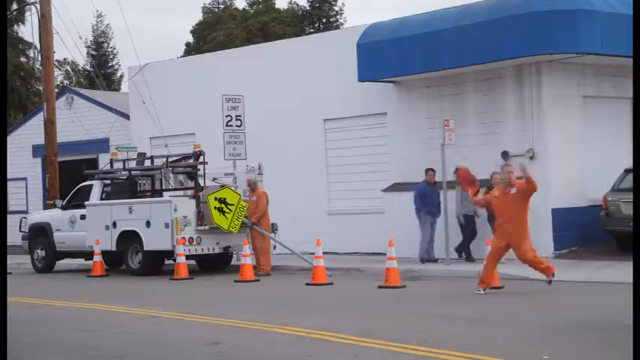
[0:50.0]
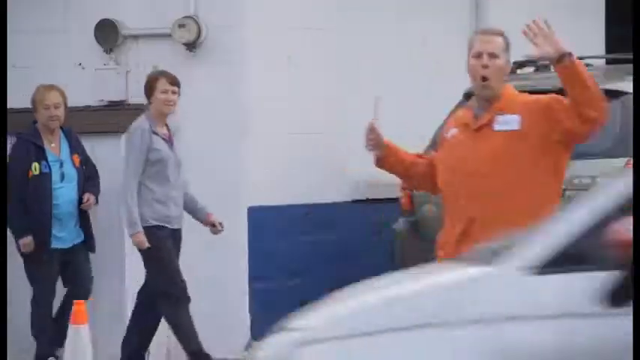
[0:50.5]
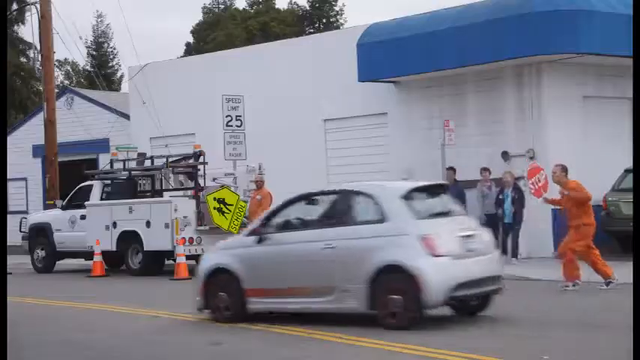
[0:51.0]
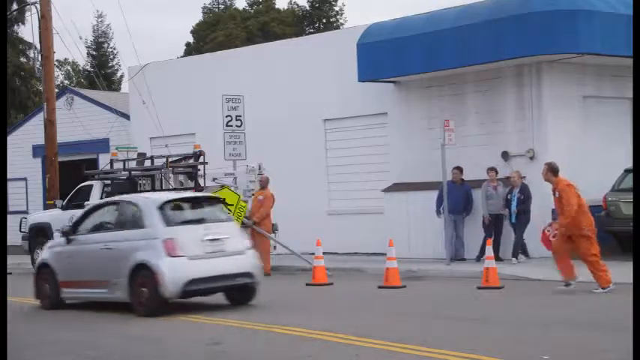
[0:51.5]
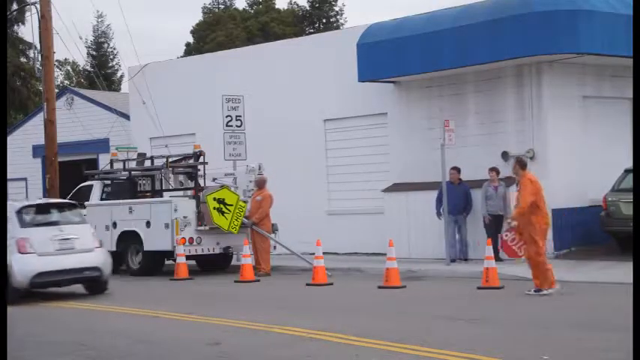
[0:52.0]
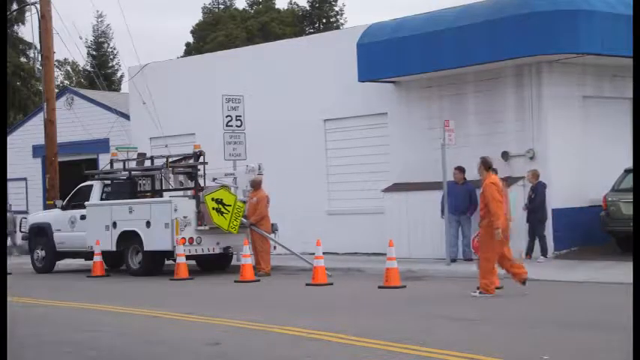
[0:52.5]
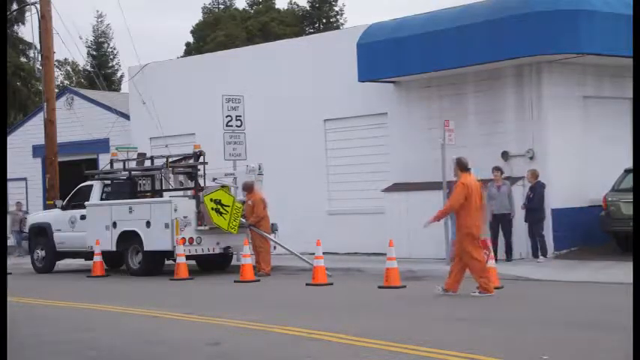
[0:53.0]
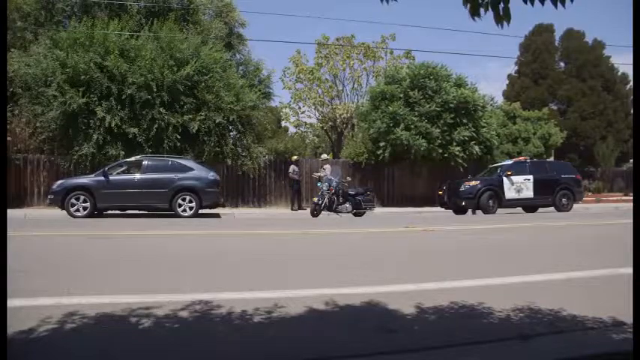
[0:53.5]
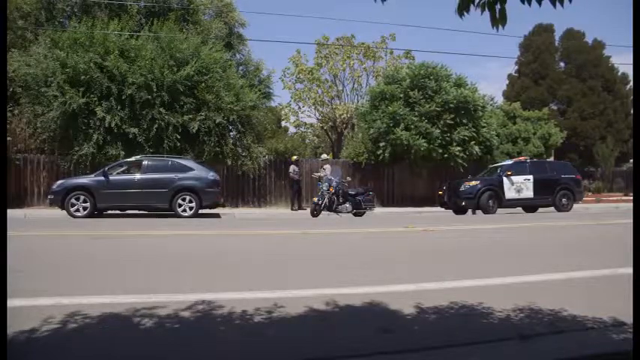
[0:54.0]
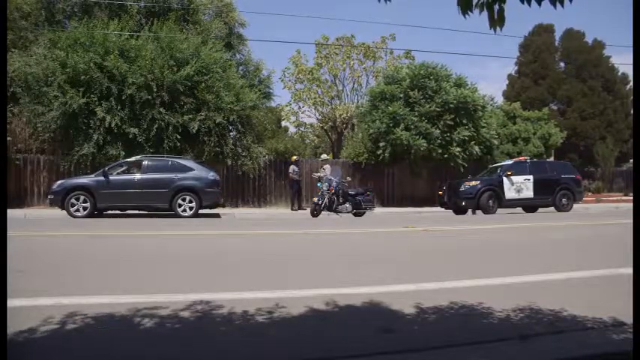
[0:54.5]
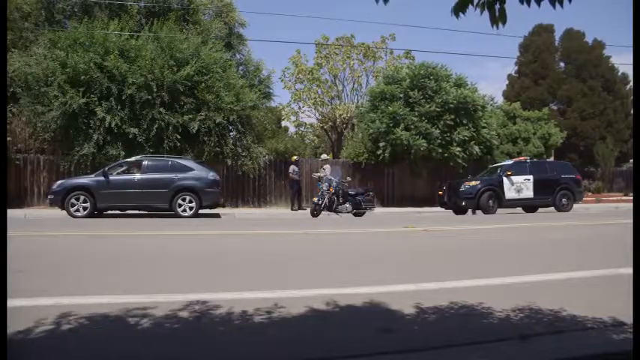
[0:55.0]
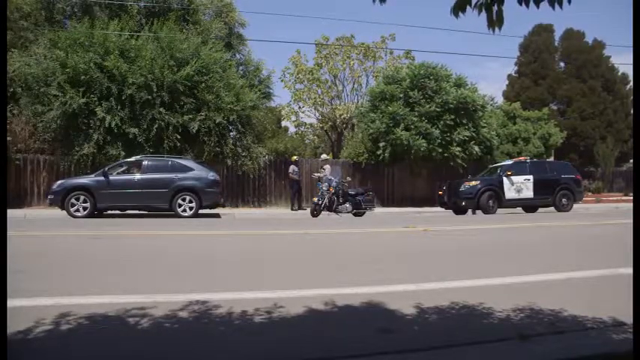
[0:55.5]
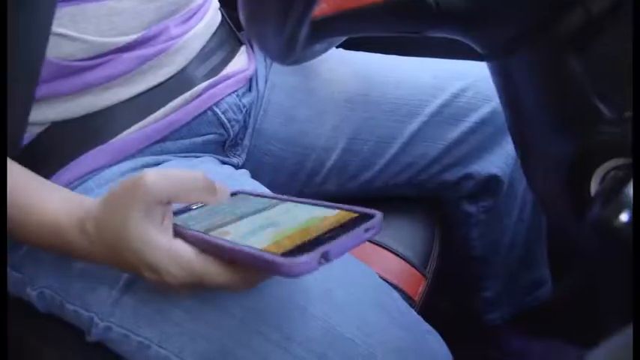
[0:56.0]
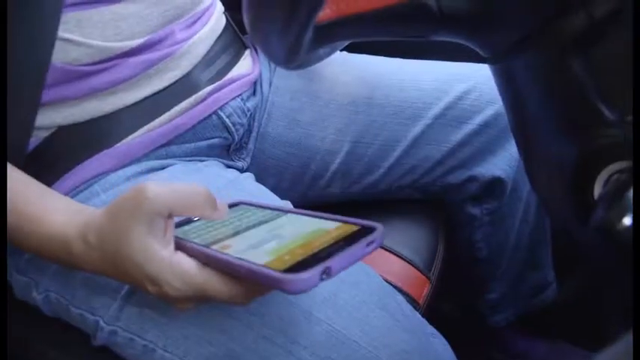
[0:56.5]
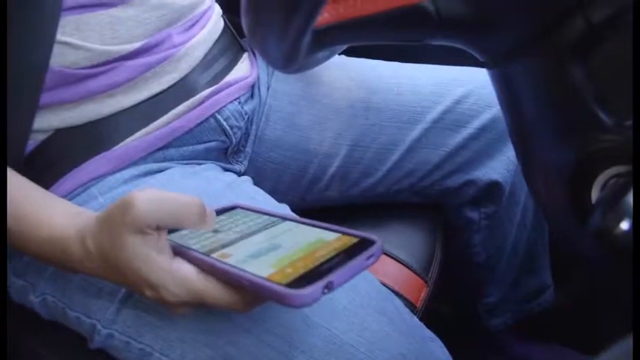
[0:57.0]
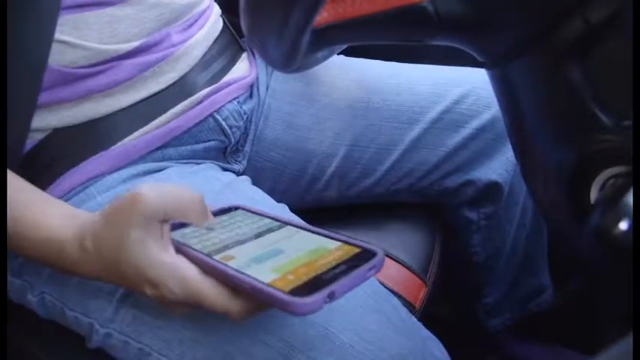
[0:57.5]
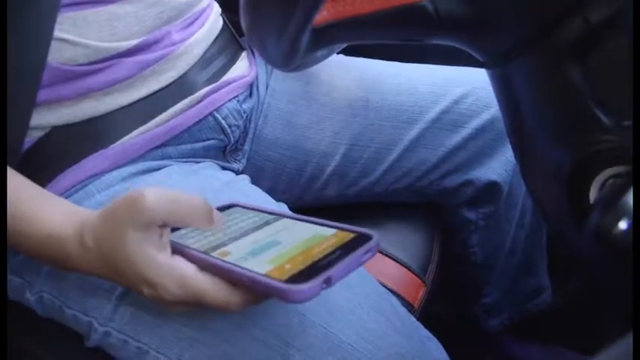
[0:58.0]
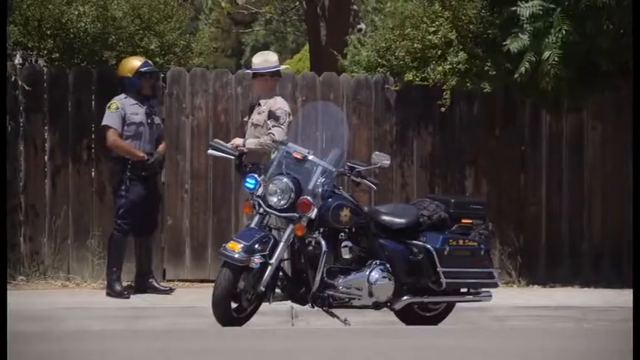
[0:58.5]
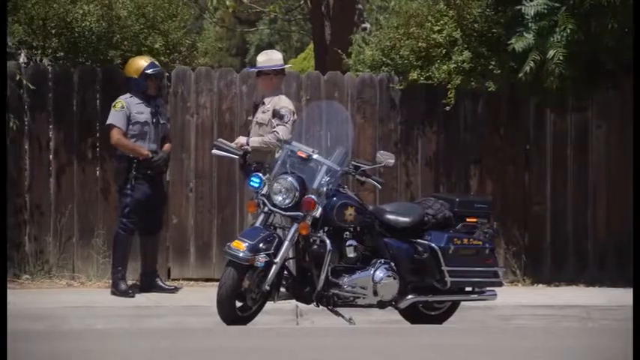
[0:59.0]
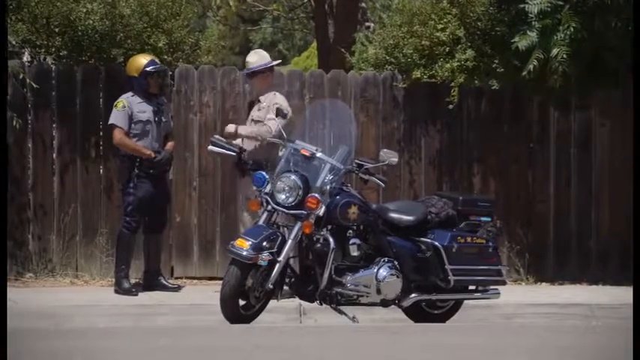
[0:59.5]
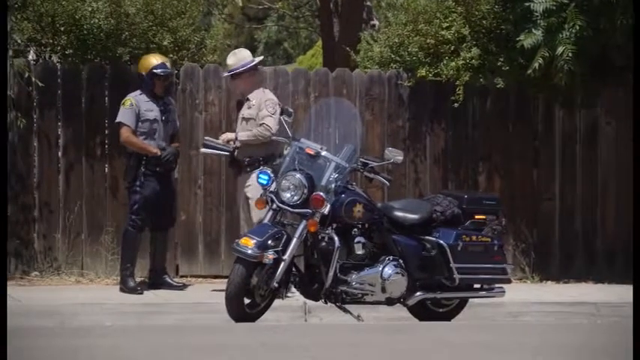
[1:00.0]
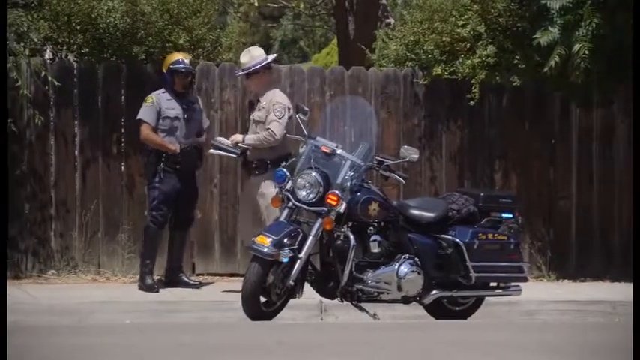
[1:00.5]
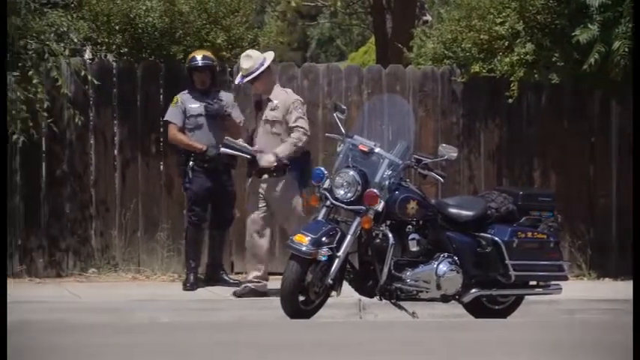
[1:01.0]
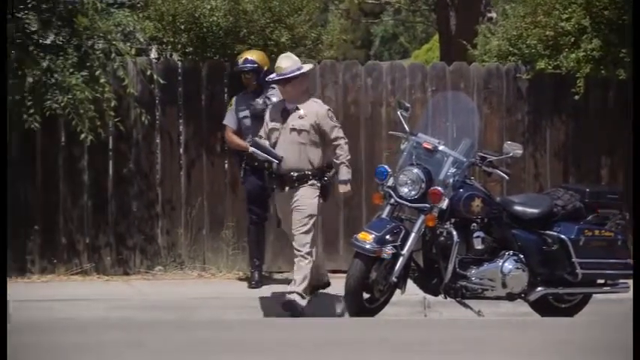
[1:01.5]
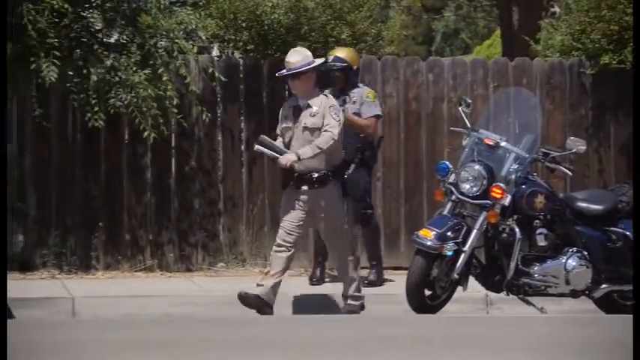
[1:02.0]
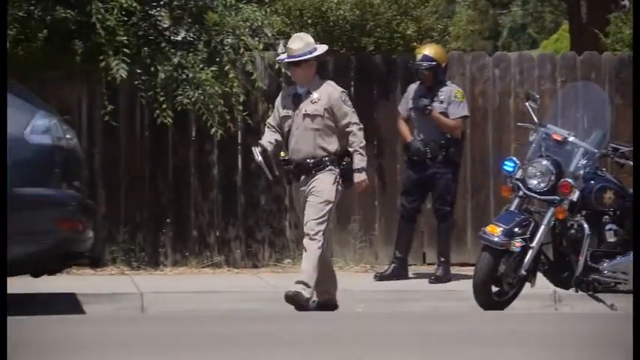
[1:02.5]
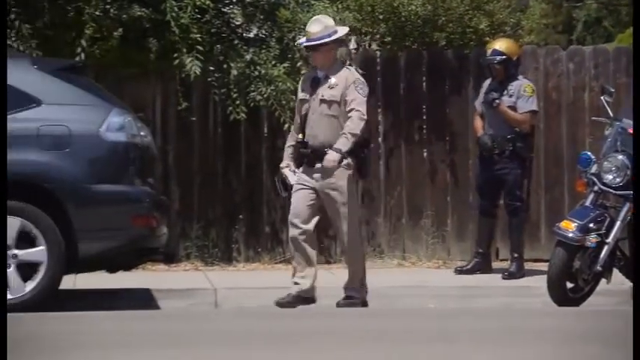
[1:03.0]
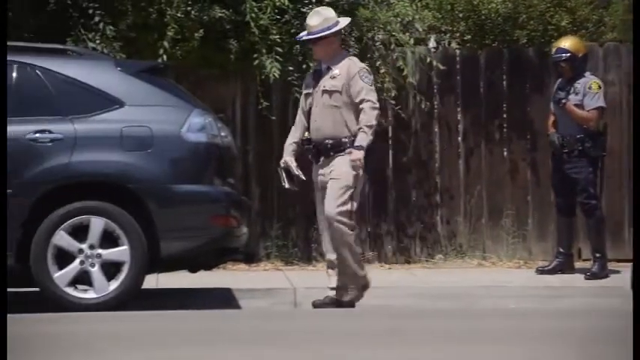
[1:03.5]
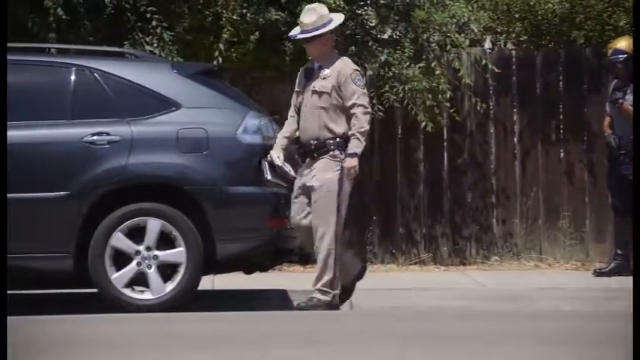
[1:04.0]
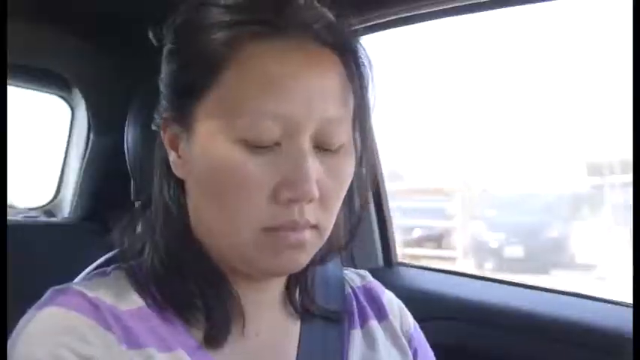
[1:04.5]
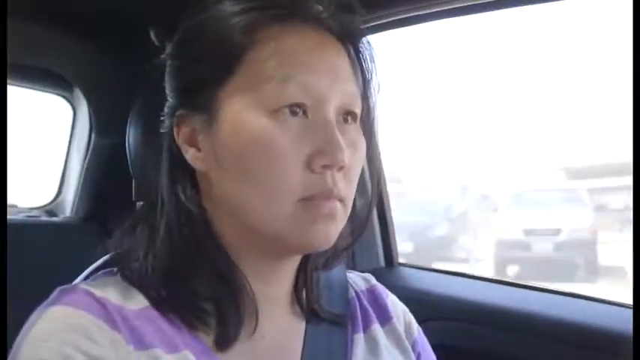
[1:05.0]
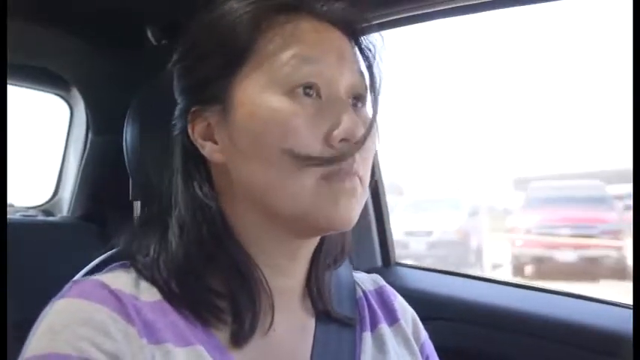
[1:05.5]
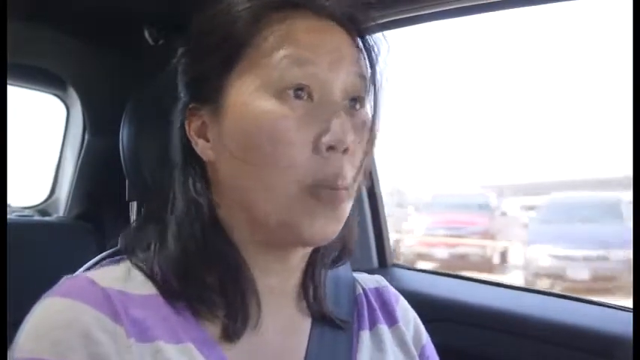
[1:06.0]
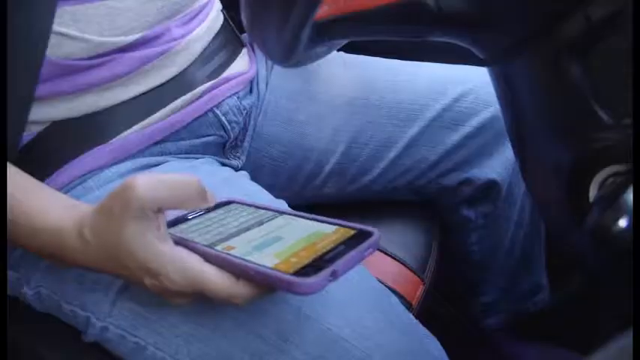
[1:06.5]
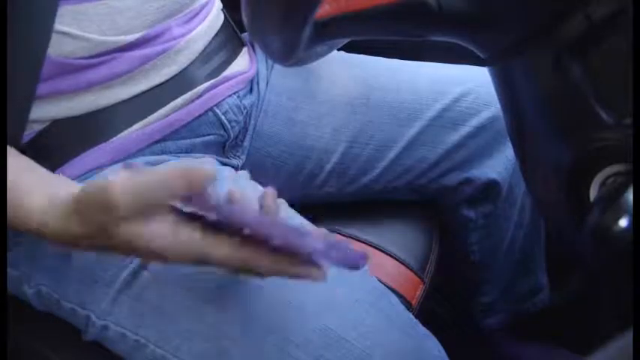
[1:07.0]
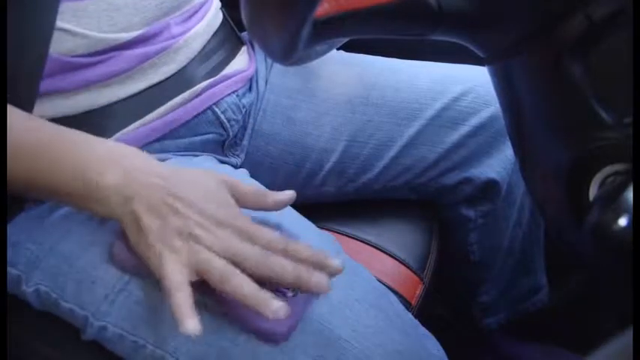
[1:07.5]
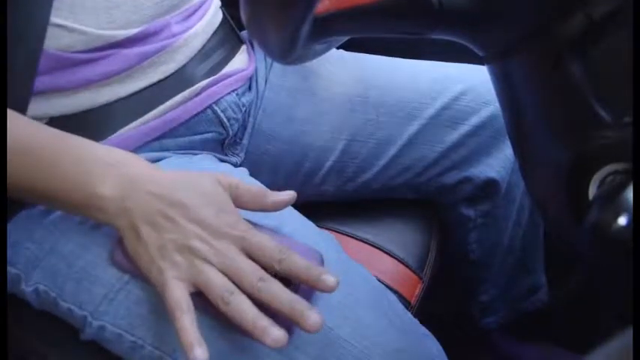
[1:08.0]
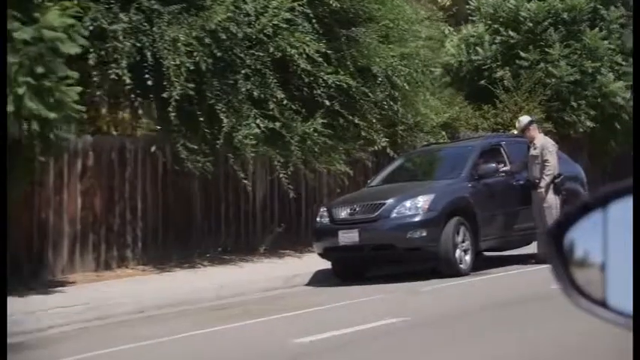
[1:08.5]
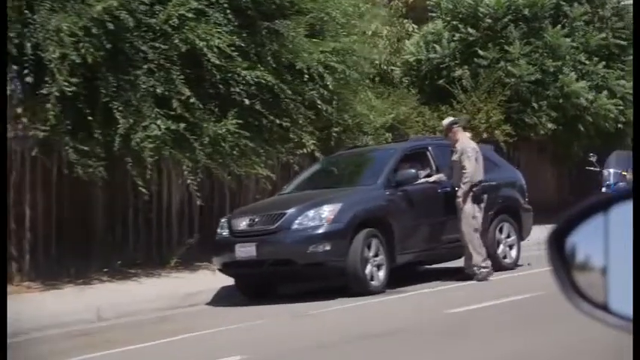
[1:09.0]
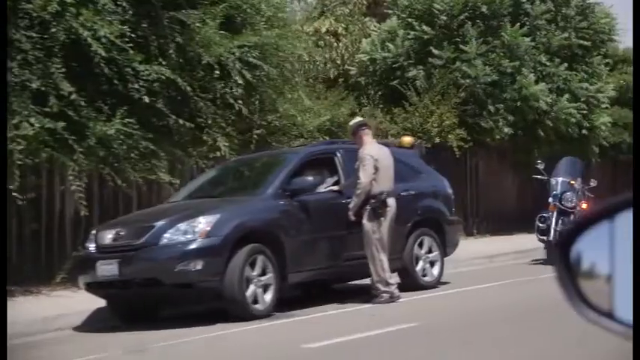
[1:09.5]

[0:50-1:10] The lady drives past the man in an orange overall. The video transitions to policemen at a roadblock. The lady uses her phone in the car, and the camera focuses on the cell phone on her lap while she drives. The scene then focuses on the two police officers at the roadblock, apparently inspecting cars and drivers. One of the police officers' motorbikes is also in the scene. One officer walks over to a car that has been stopped. The camera shifts to the lady in the car and focuses on her facial expression, which is shocked at seeing the police officers. She puts the phone upside down on her lap, trying to hide it, as she drives past the police officers at the roadblock.